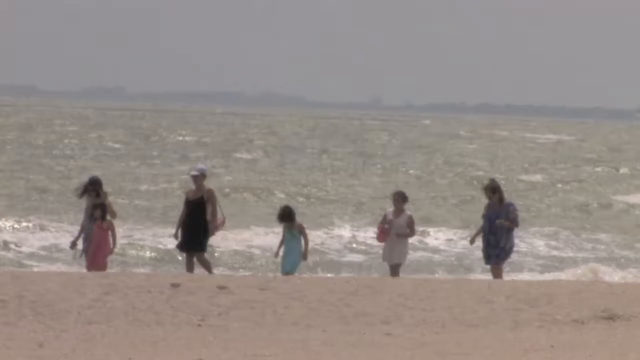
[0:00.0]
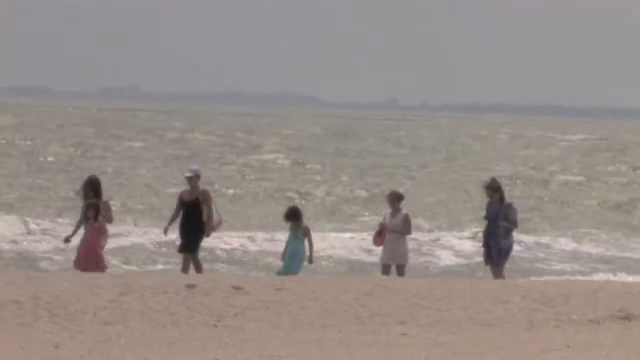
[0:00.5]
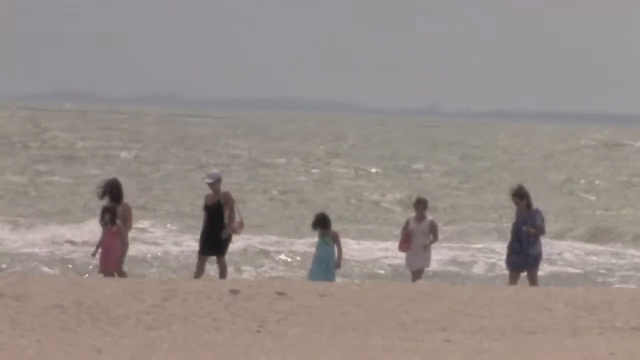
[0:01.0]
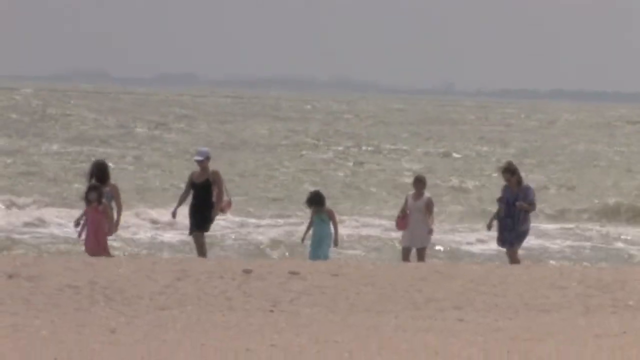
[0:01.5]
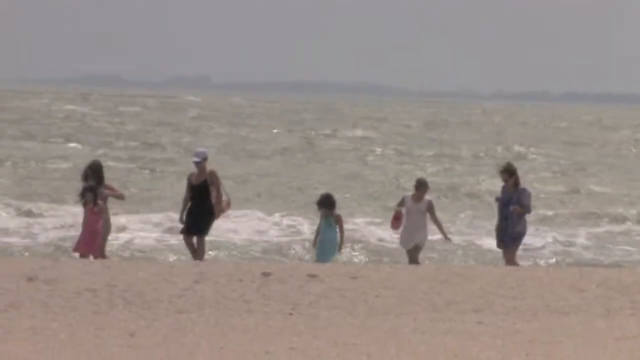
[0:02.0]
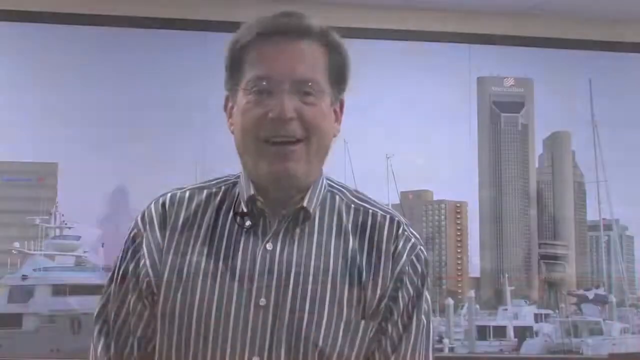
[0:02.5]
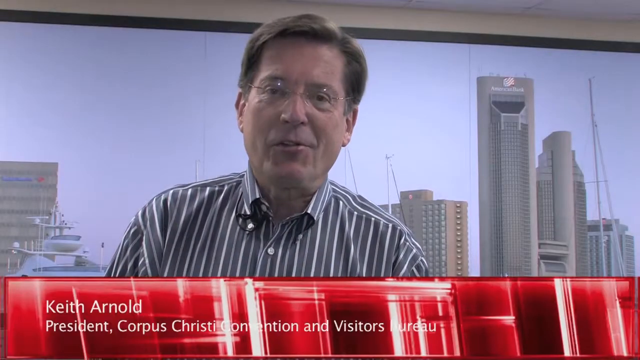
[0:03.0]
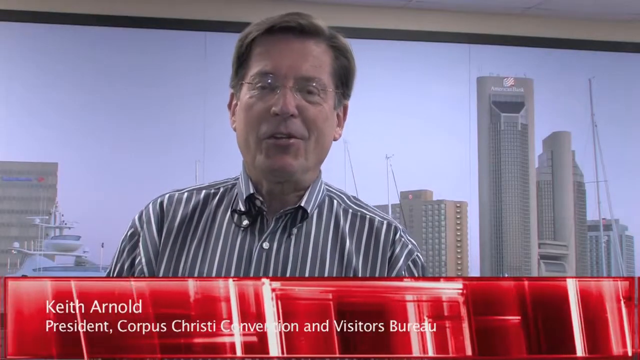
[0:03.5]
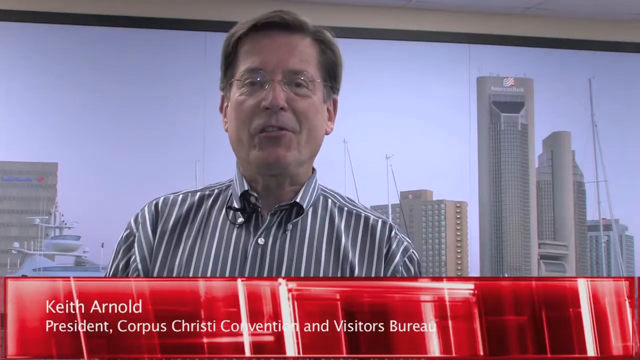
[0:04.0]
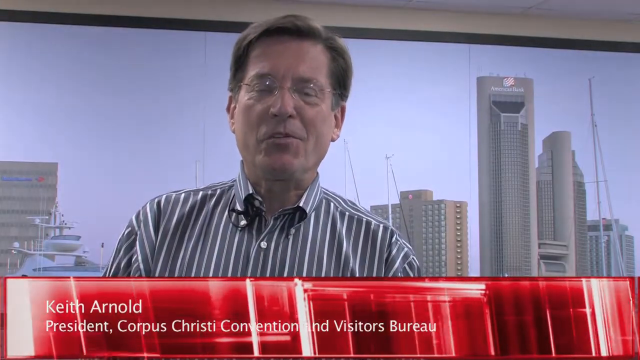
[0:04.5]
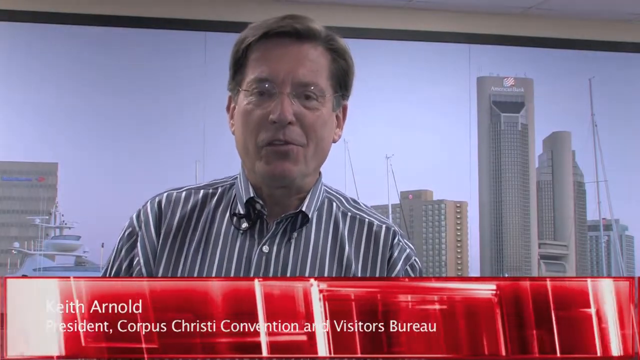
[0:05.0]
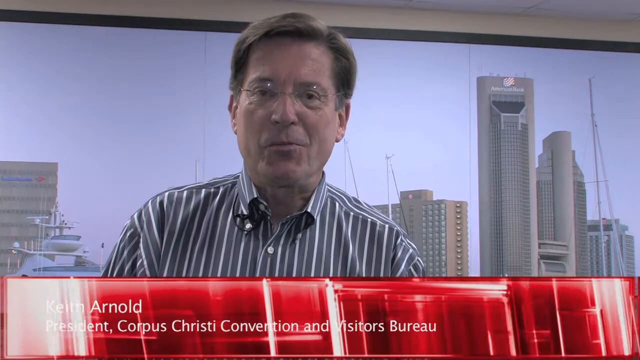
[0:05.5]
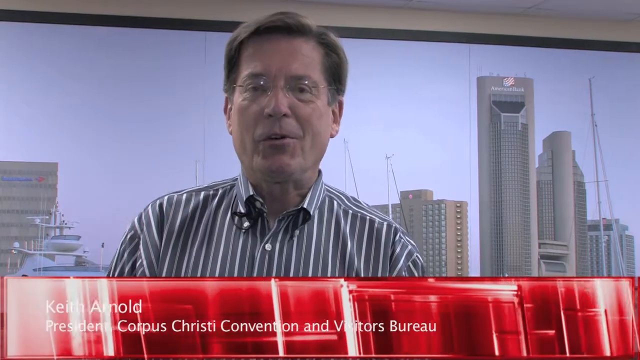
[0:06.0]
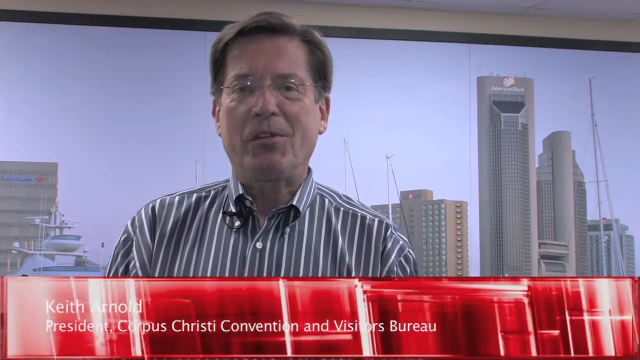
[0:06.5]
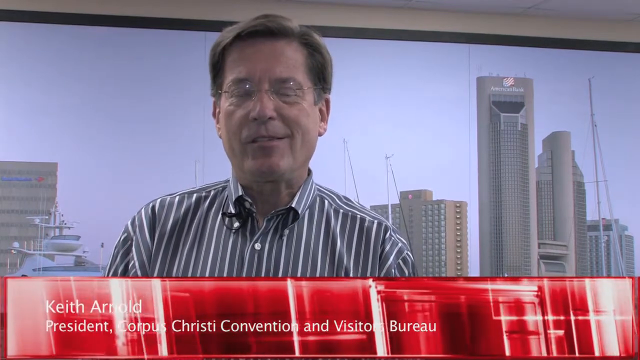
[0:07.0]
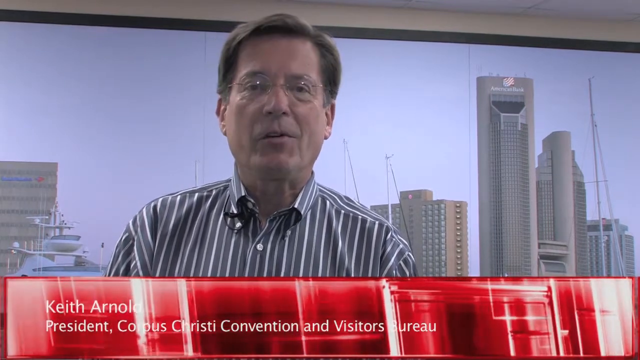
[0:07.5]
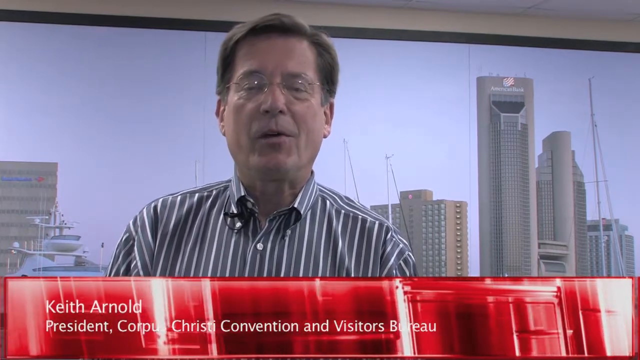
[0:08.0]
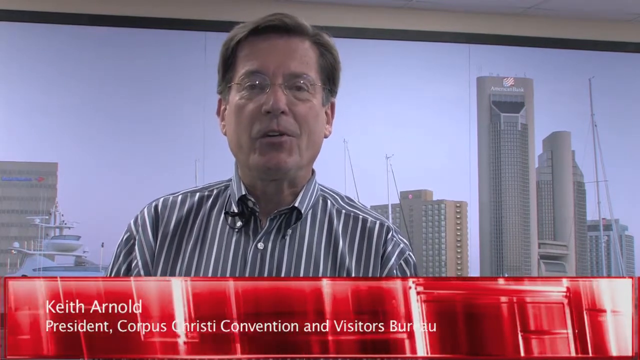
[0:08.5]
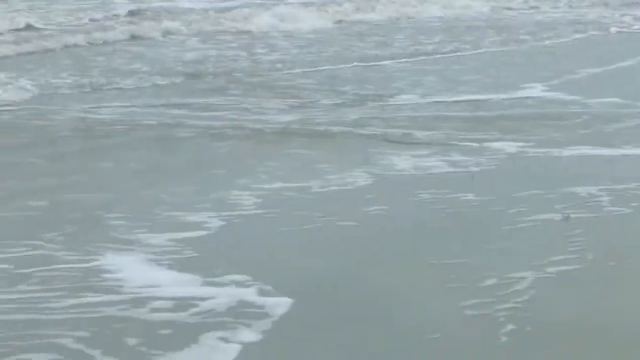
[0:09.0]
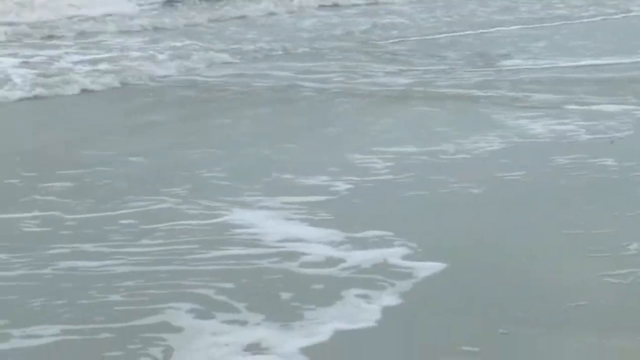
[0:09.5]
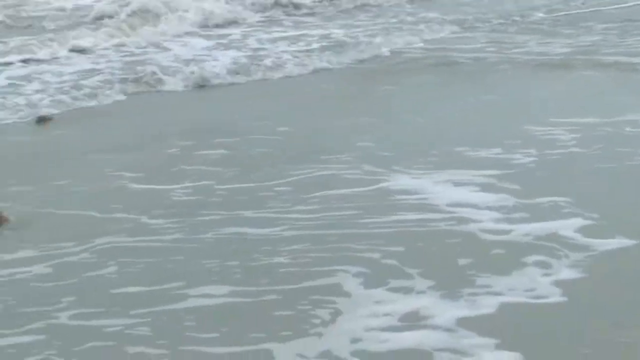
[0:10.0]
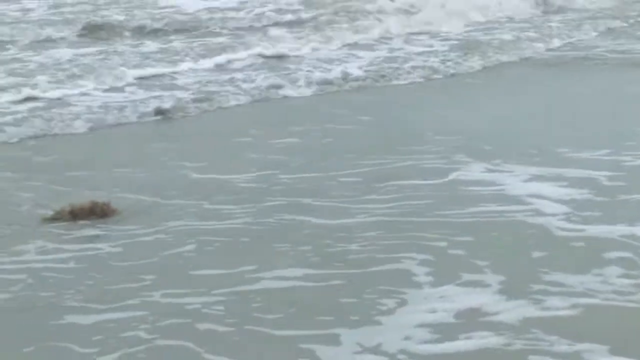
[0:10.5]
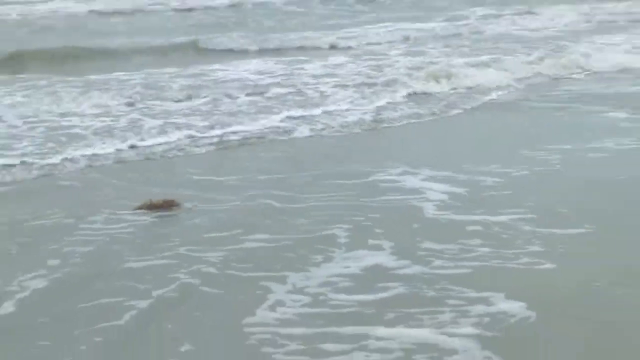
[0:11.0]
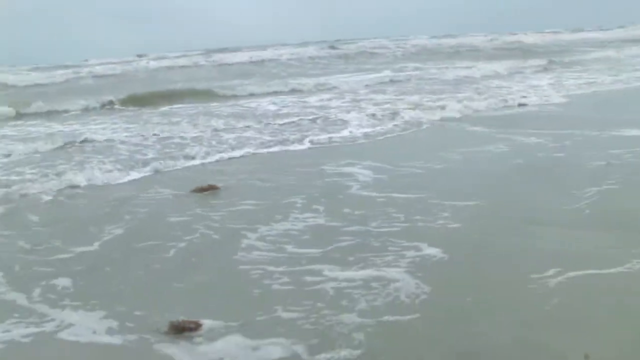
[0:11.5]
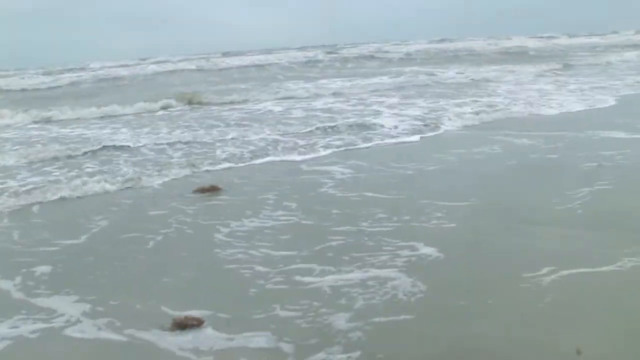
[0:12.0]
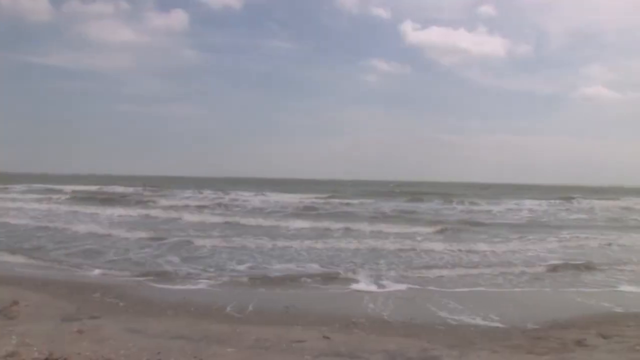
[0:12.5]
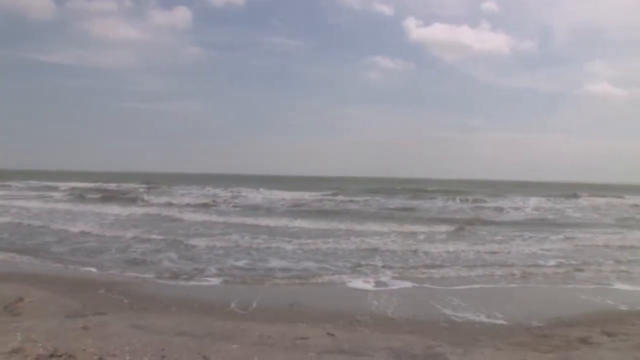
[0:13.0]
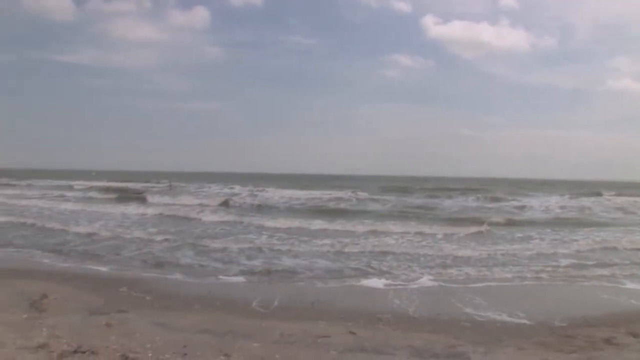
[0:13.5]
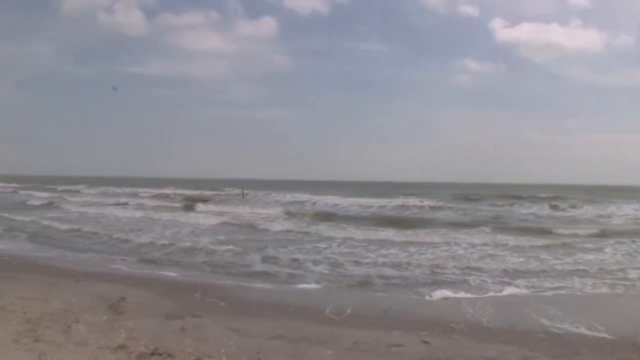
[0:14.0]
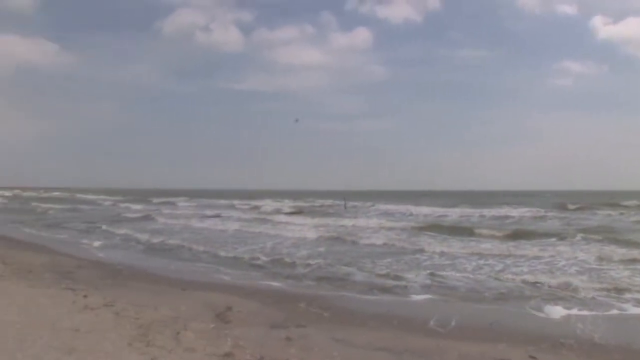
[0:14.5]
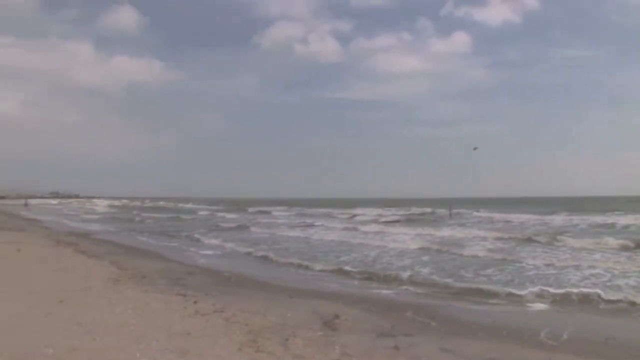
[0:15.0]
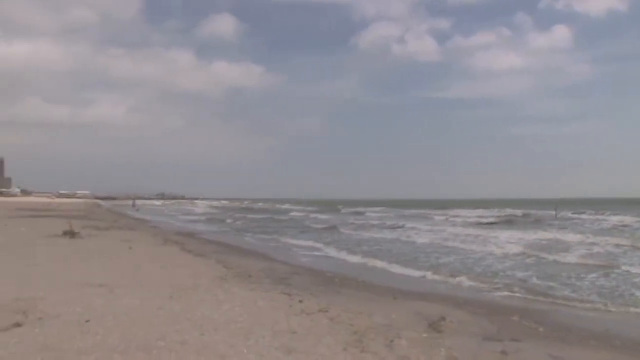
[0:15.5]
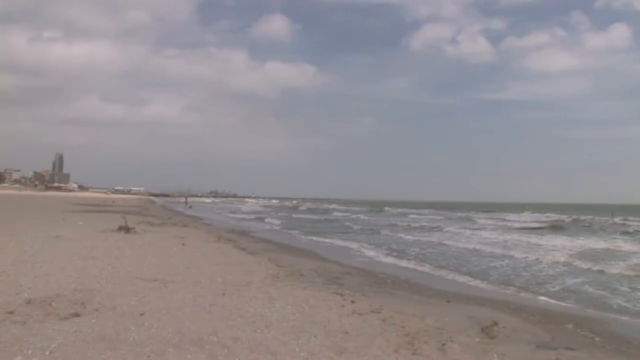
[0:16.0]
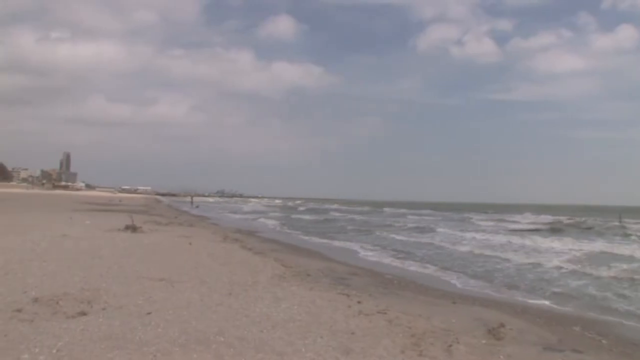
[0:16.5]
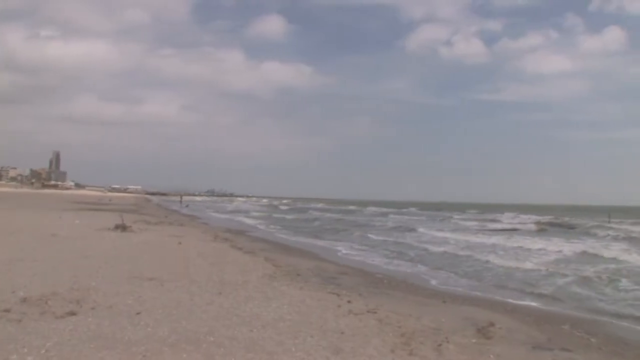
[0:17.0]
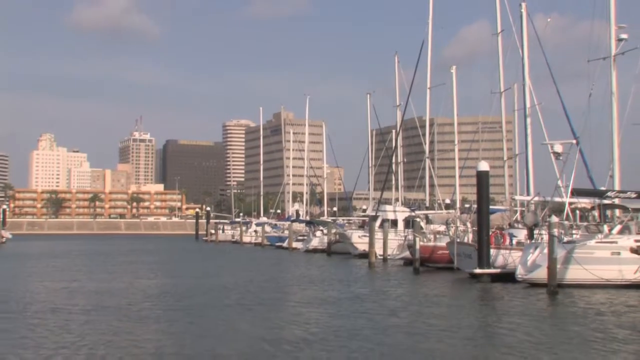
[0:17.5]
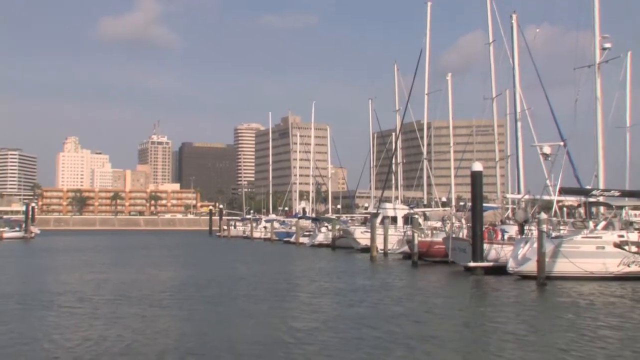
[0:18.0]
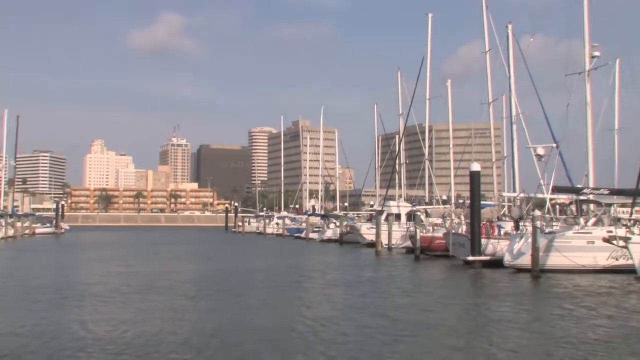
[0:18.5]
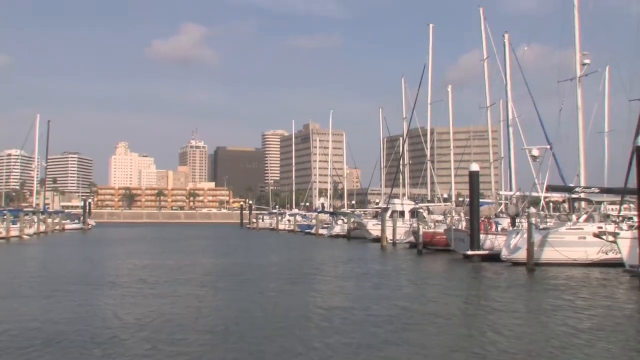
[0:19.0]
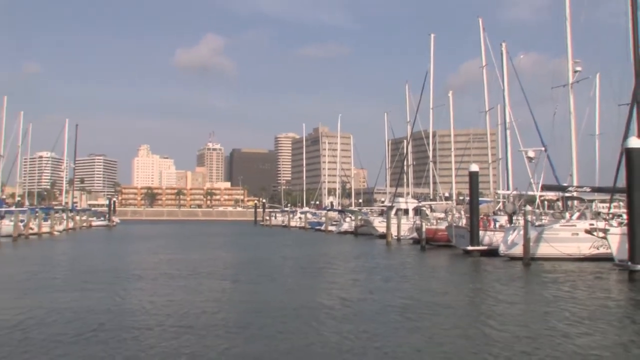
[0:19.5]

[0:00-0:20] A beachfront scene shows ocean waves in the middle of the screen, crashing in at what look like three or four feet tall, under a hazy sky. Six people are on screen: a woman in purple on the right side; to her left, apparently a woman in a pink dress; to the left of that, apparently a little girl in a blue dress; to the left of that, a woman in a black dress; and to the left of her, two more figures, a little girl out front in a pink dress and, behind her, apparently a woman in a white dress. They all appear to be walking and facing toward the left side of the screen as the waves crash in. The scene switches to a man in his 50s facing the camera. He wears circular glasses and a gray shirt with small white vertical lines running down it. At the bottom of the screen, white letters on a red banner read "Keith Arnold president Corpus Christi Convention and Visitors Bureau". He is talking and looking toward the camera; he blinks and his head moves slightly left and right. More waves crash in on a beach, followed by larger waves crashing on a beach as the camera pans to the left. Then a cityscape appears in the background with a bay or a dock or something similar in the foreground.